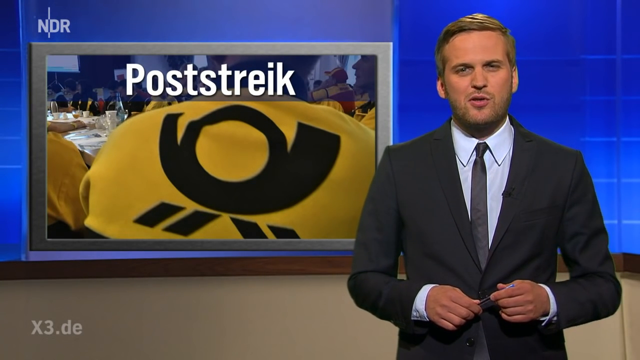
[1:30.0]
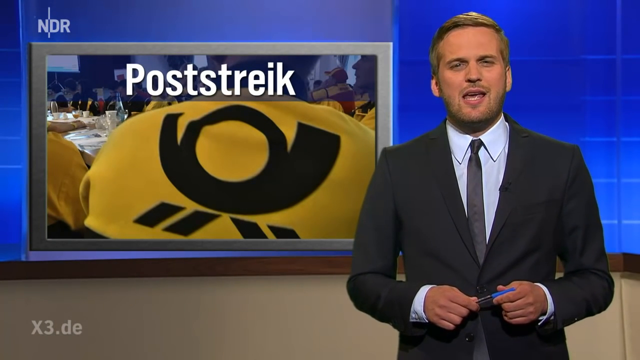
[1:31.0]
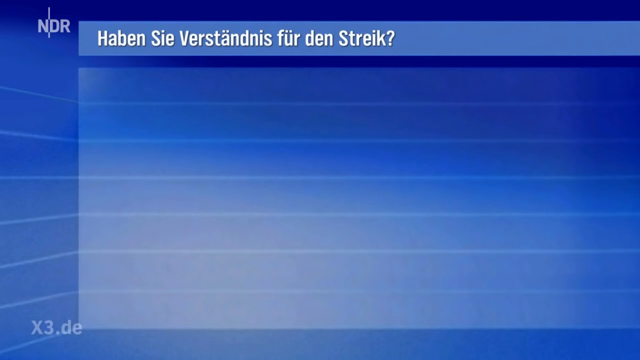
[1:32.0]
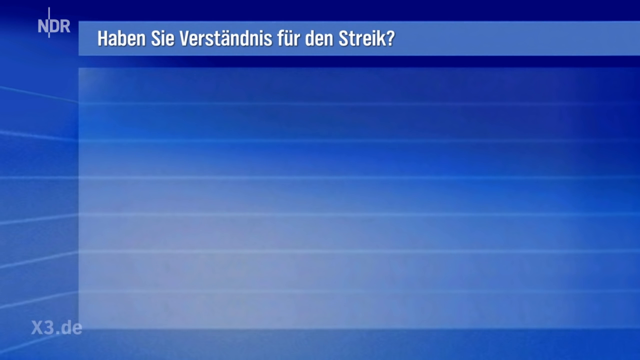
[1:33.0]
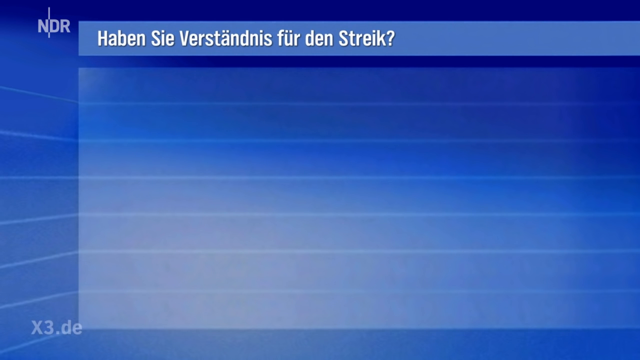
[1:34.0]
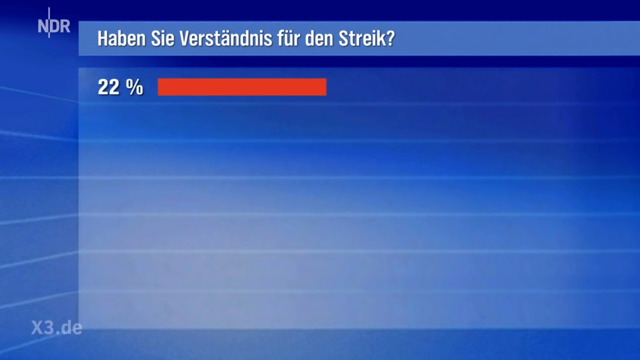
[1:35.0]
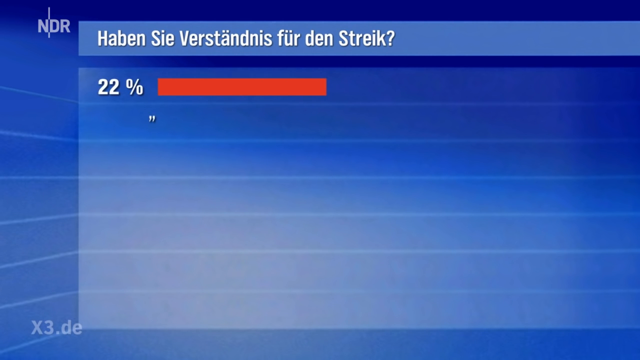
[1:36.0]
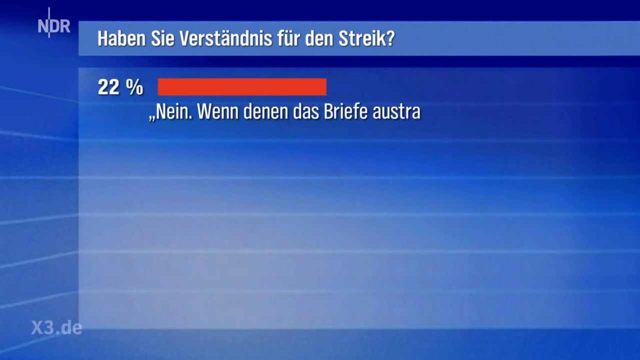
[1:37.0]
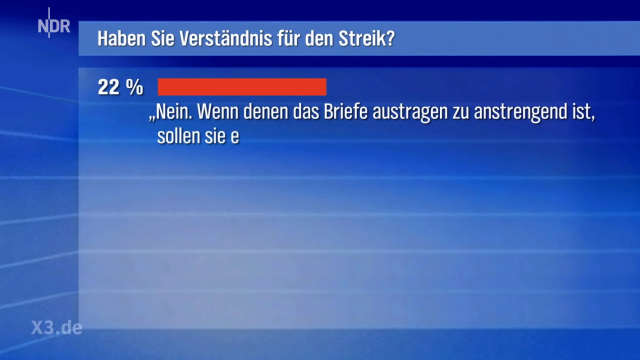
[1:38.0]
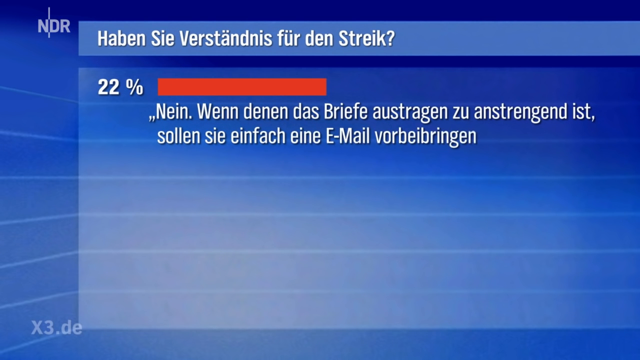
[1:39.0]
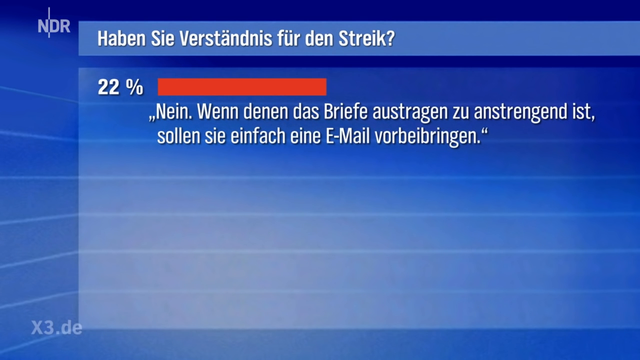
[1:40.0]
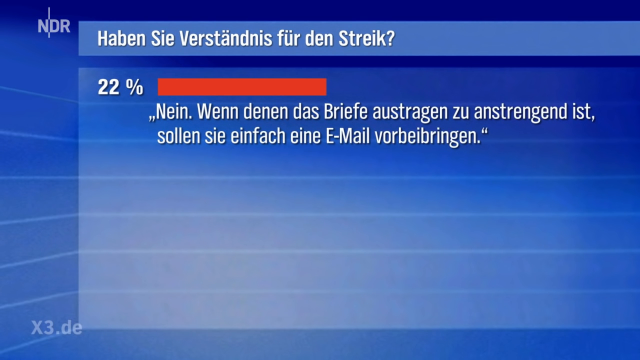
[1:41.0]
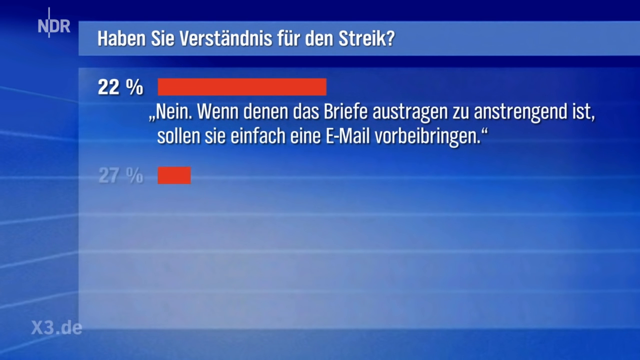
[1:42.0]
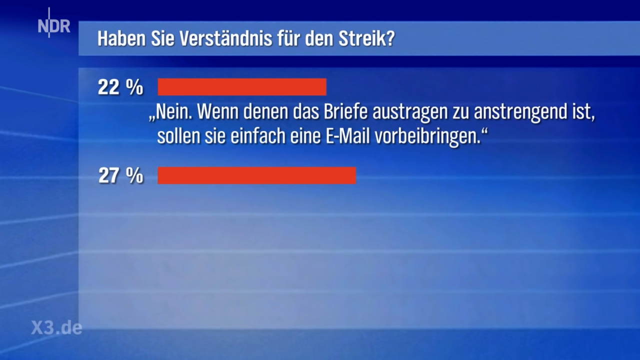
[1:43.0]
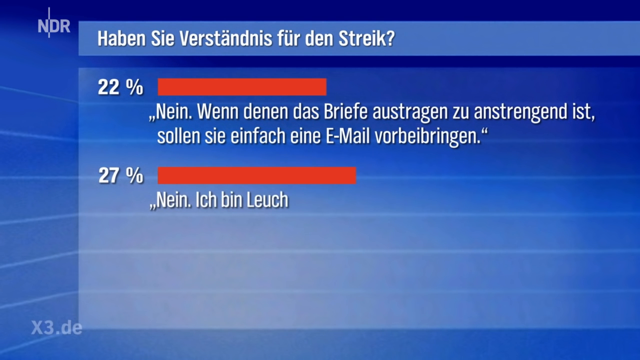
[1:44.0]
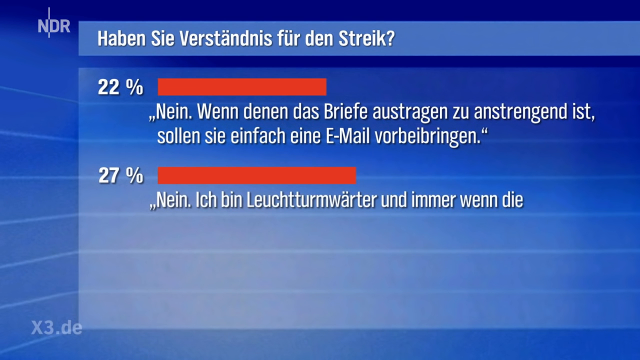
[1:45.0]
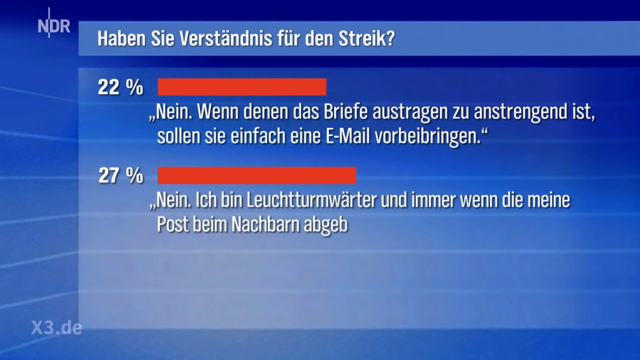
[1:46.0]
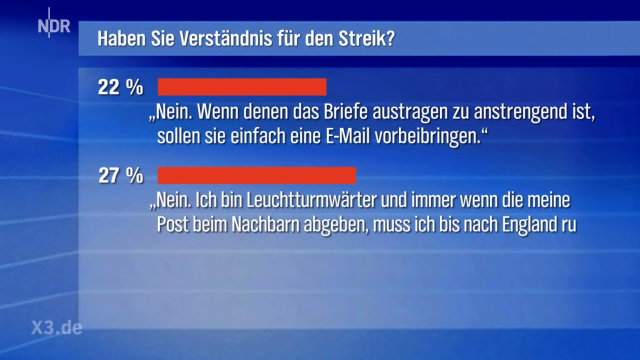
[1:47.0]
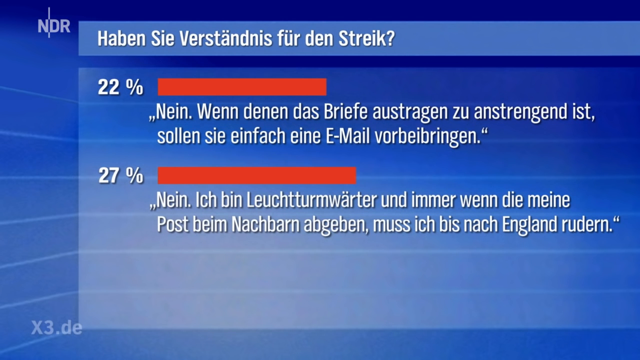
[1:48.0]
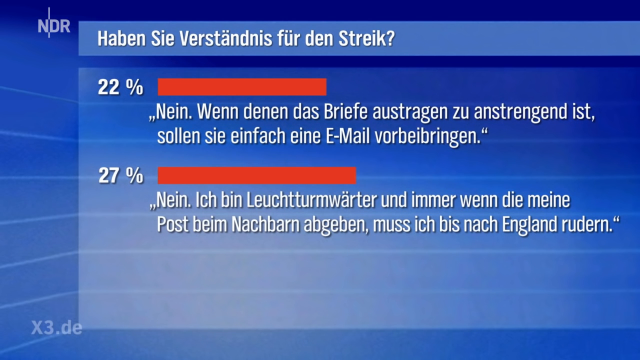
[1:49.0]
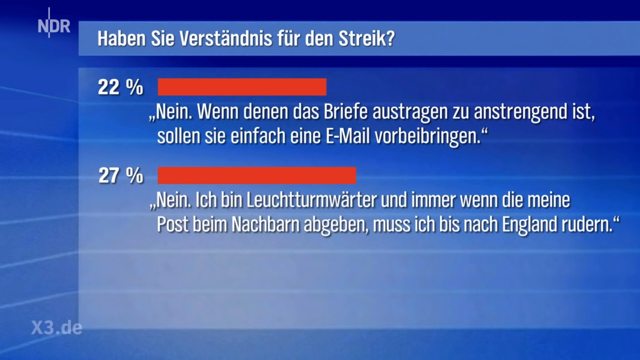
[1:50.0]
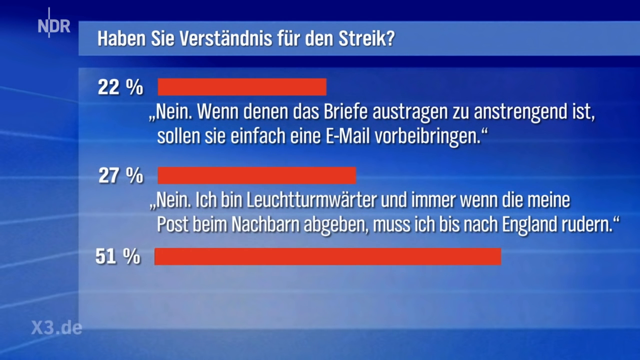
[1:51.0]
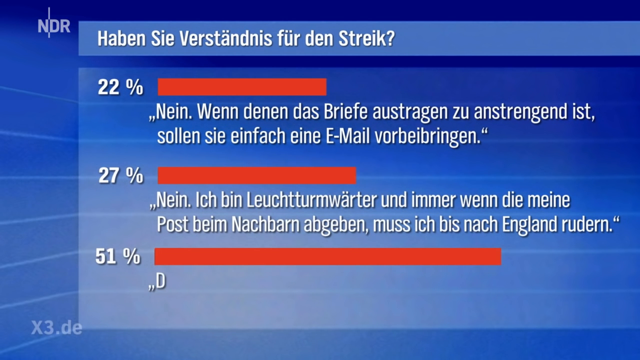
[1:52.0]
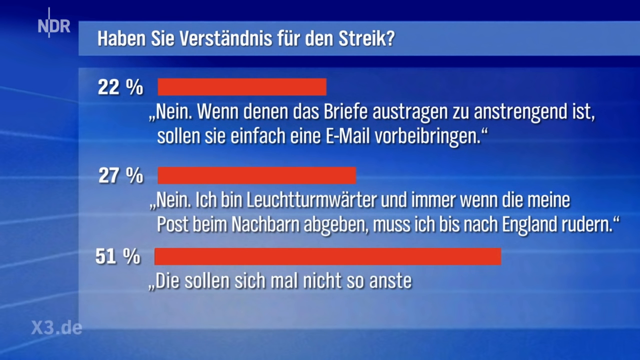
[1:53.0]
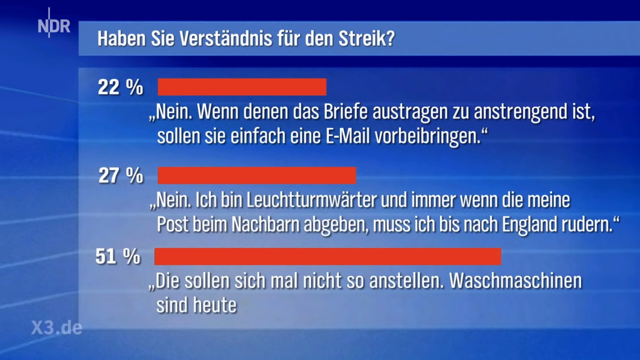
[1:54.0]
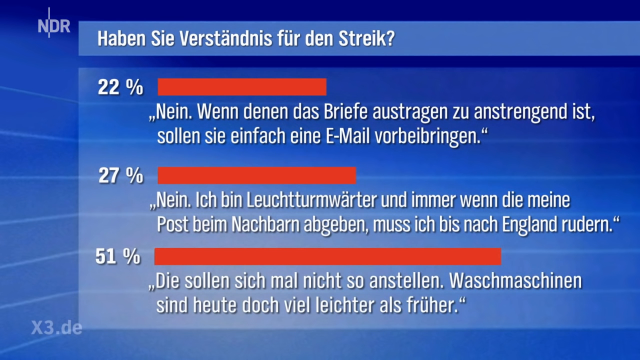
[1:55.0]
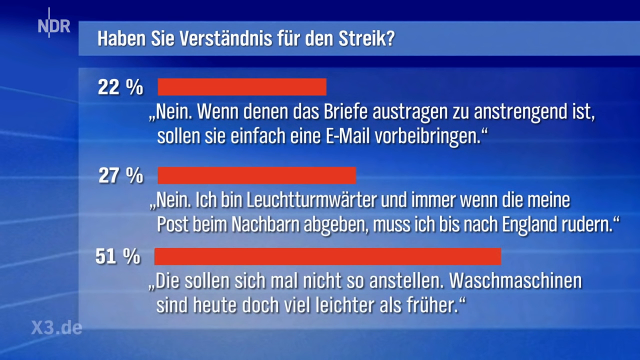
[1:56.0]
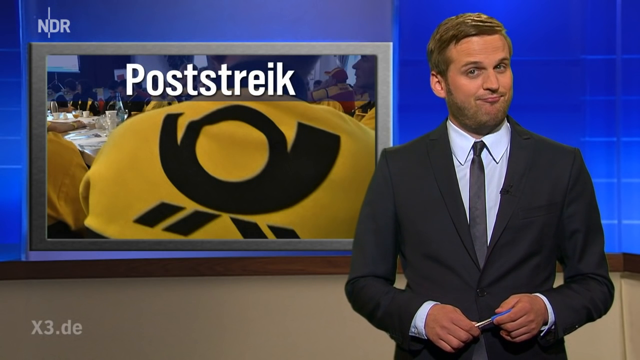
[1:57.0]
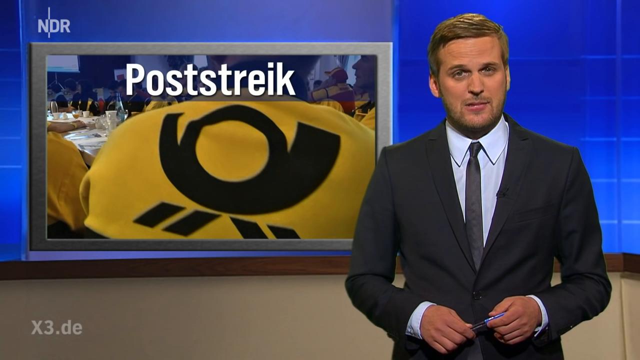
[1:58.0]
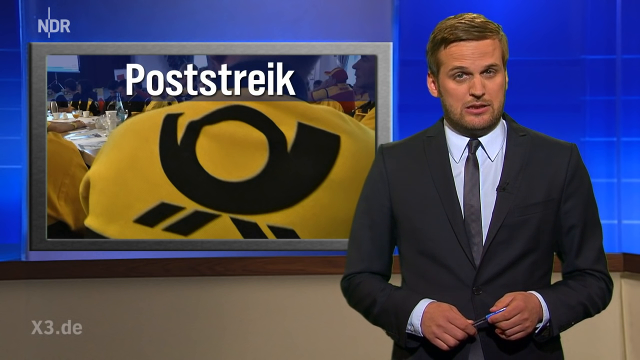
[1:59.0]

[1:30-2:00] On the left side of the news studio is a monitor with a silver outline showing the word "Poststreik". A news reporter is on the right side, talking, with his arms bent at the elbow. Another question appears in a foreign language, its first word "Haben". Below it, "22%" appears with a two-line response that includes the word "email". The next shows "27%", with a response that includes the word "England", and then "51%" appears with another two-line response.